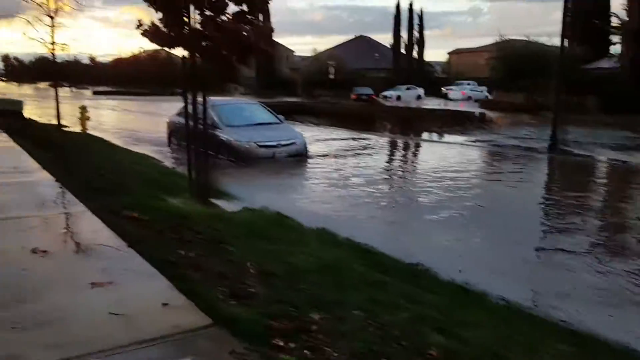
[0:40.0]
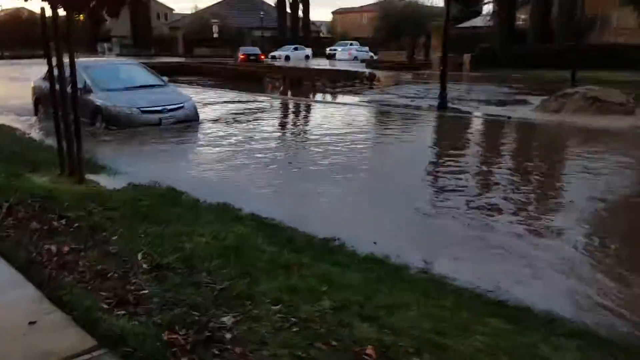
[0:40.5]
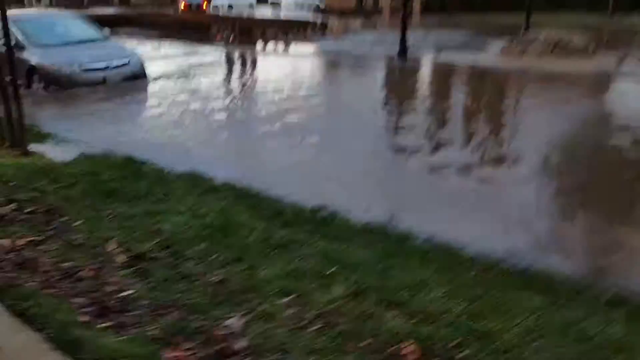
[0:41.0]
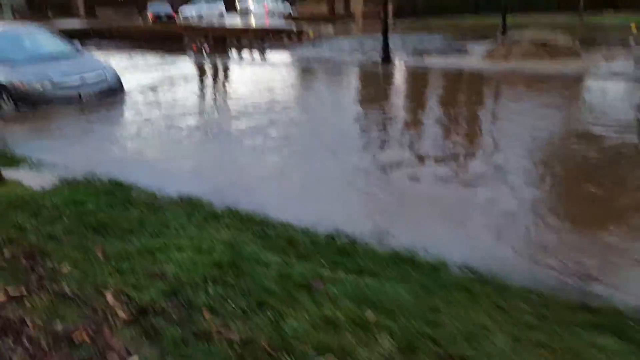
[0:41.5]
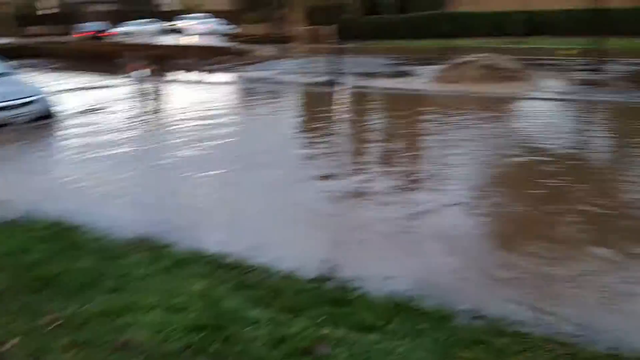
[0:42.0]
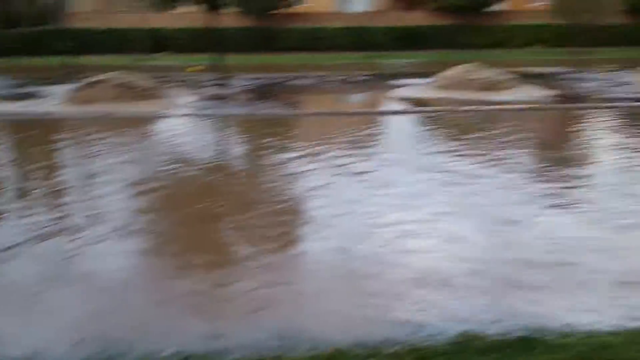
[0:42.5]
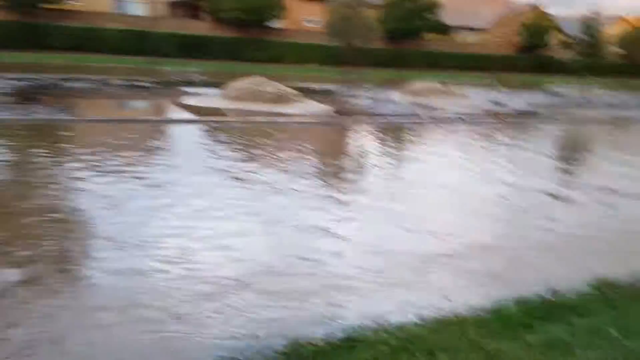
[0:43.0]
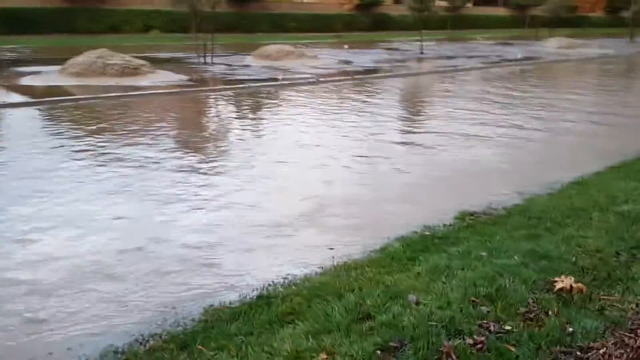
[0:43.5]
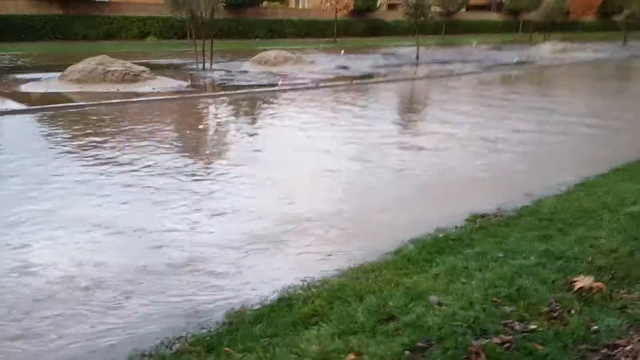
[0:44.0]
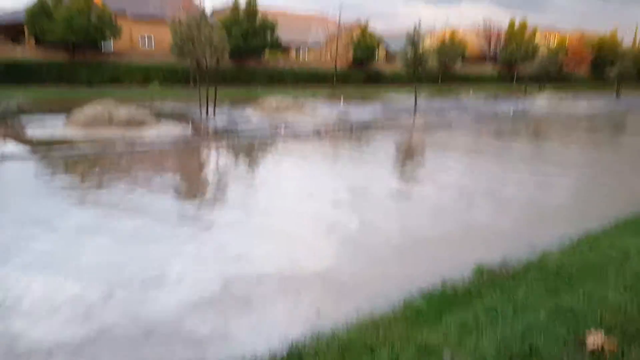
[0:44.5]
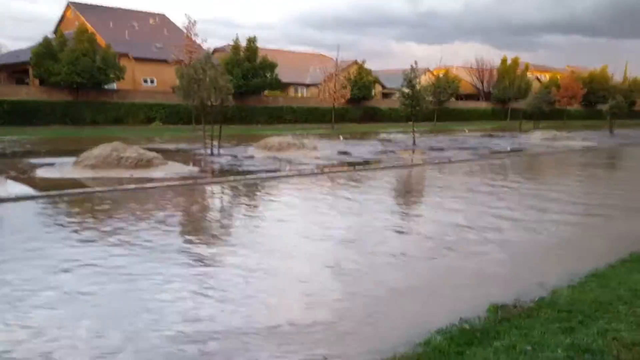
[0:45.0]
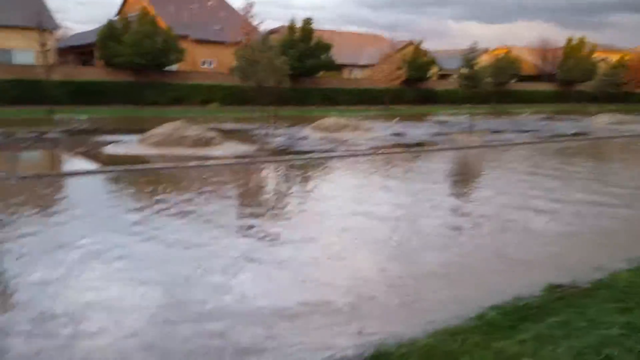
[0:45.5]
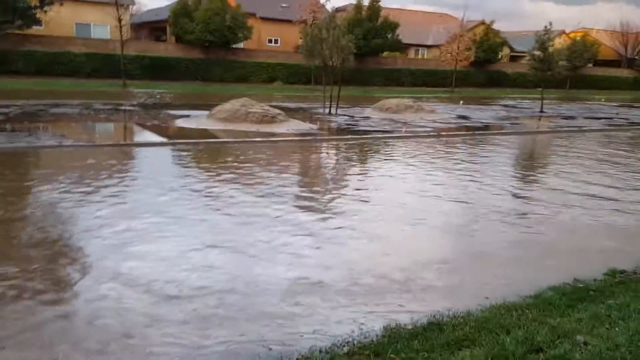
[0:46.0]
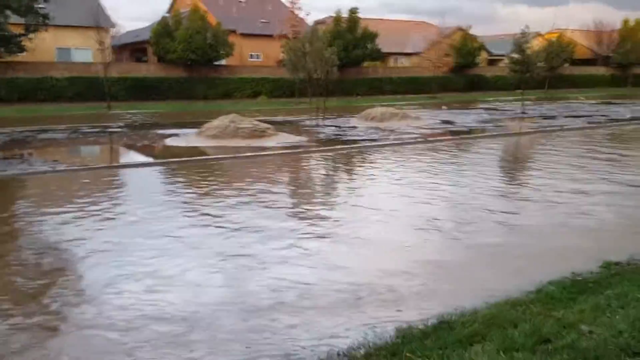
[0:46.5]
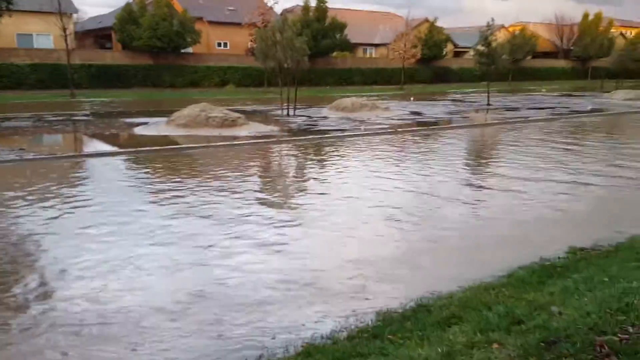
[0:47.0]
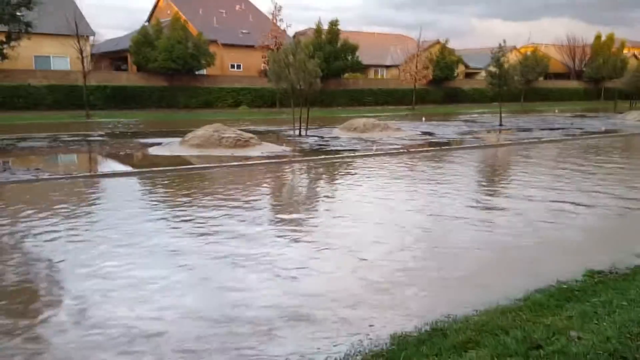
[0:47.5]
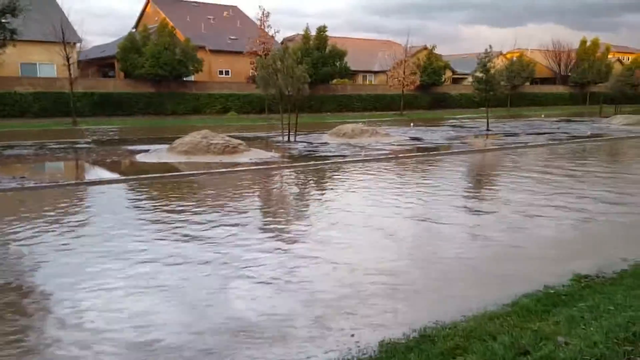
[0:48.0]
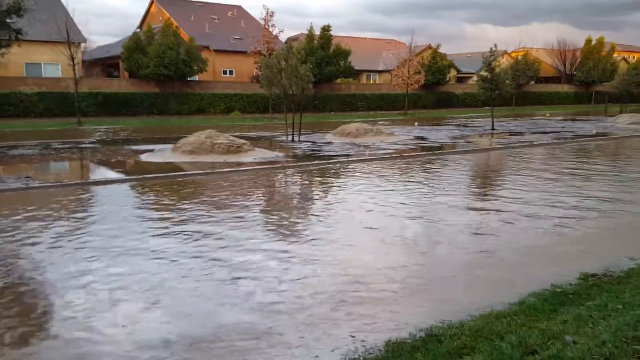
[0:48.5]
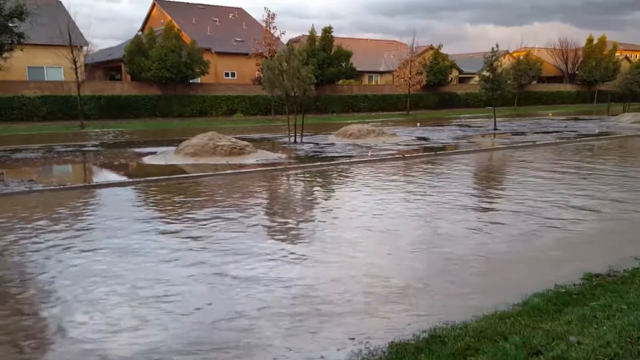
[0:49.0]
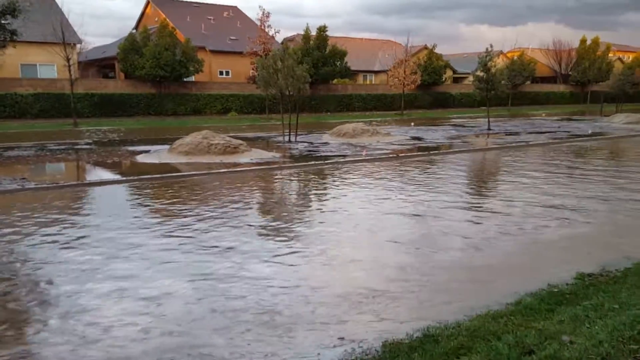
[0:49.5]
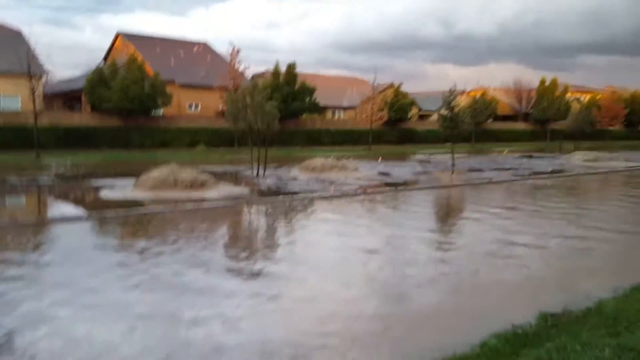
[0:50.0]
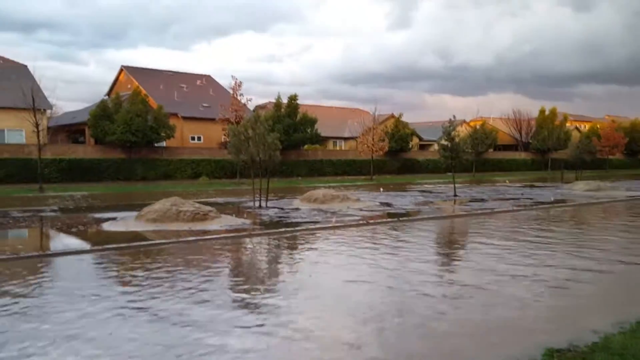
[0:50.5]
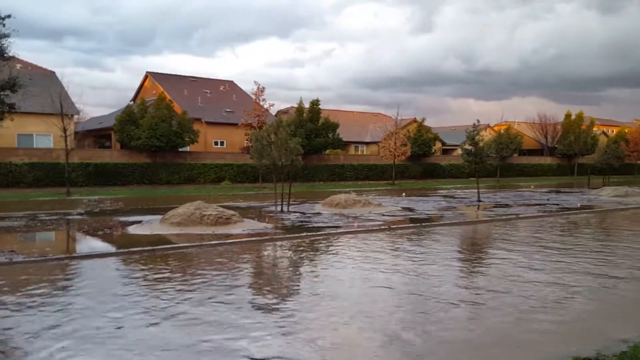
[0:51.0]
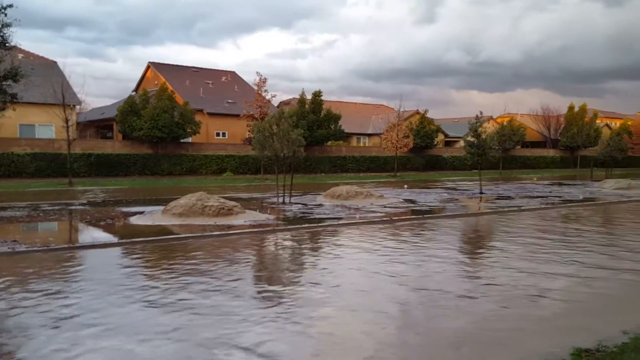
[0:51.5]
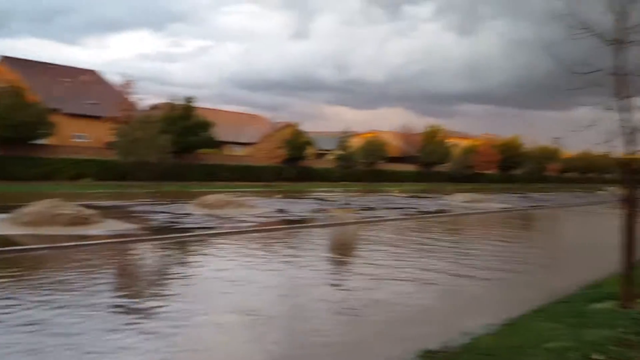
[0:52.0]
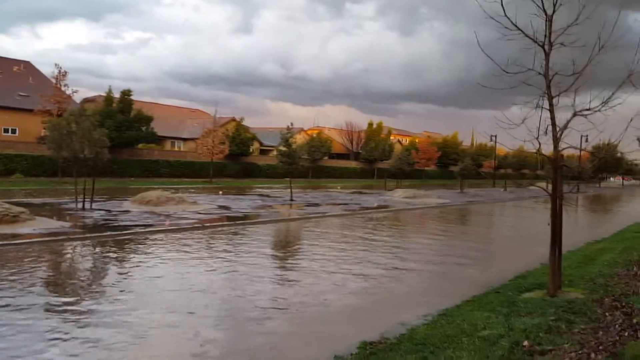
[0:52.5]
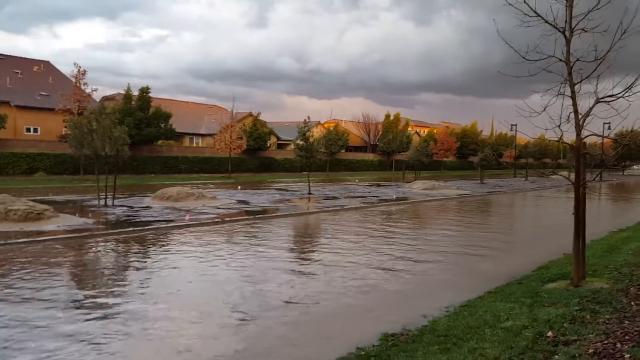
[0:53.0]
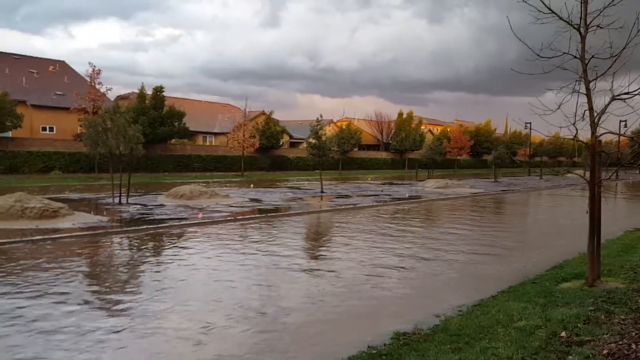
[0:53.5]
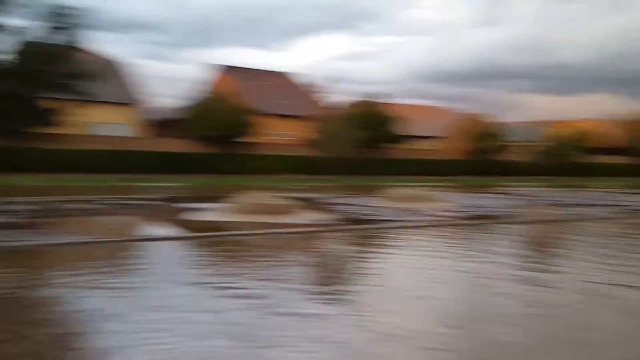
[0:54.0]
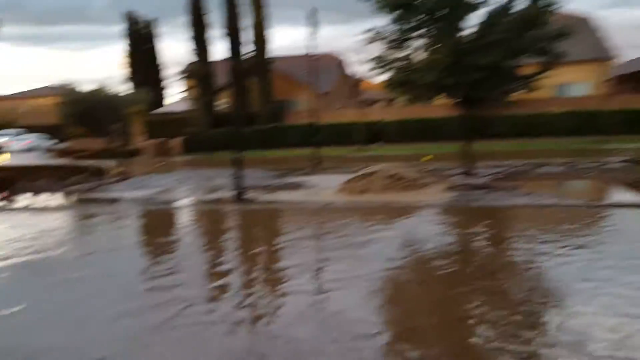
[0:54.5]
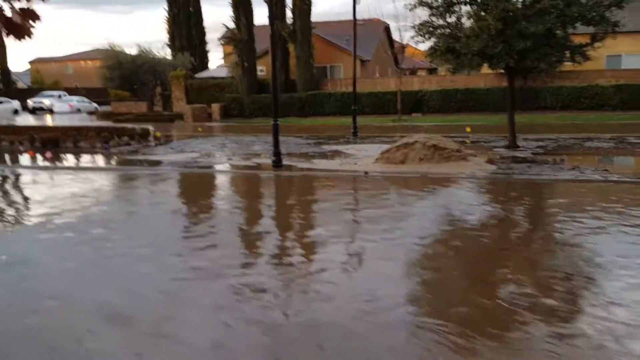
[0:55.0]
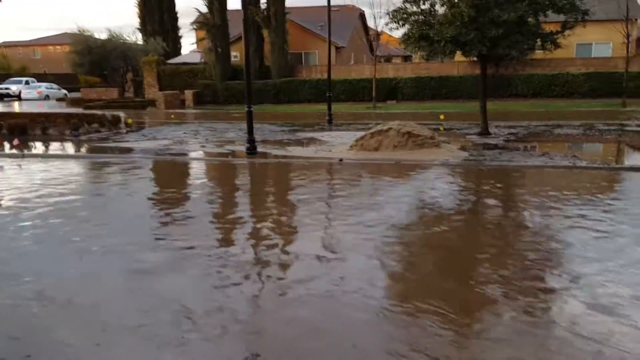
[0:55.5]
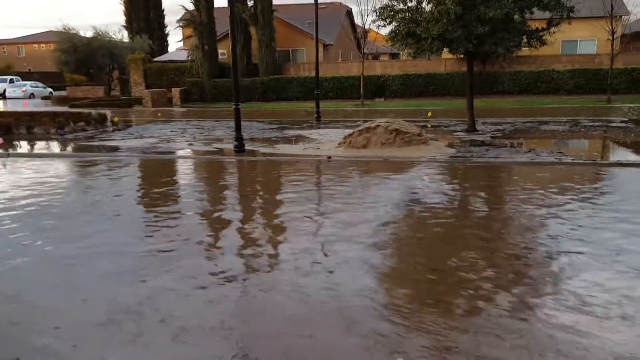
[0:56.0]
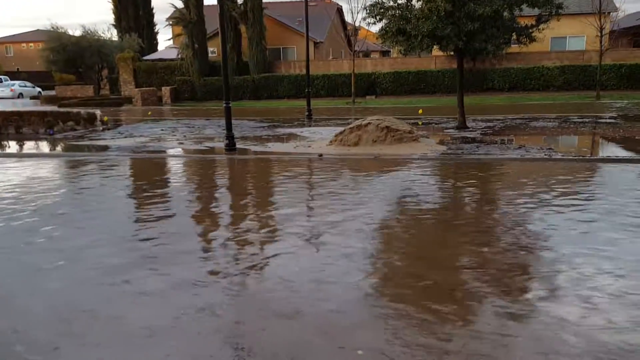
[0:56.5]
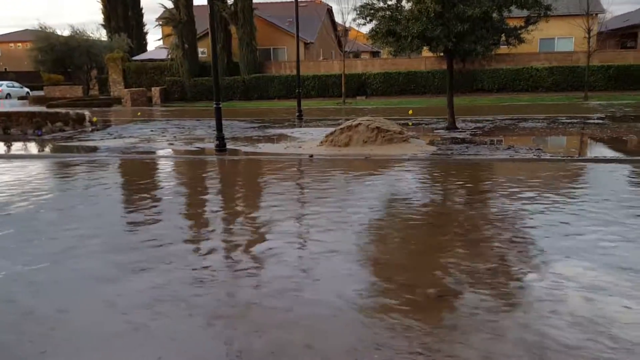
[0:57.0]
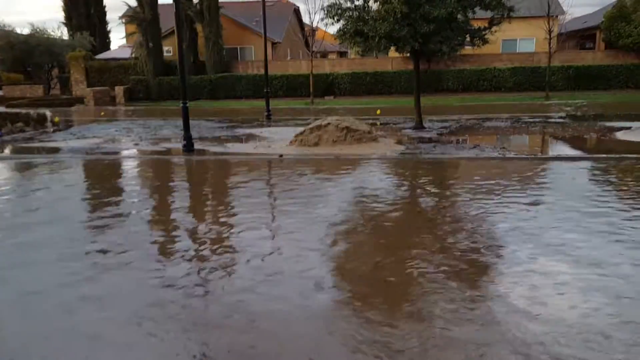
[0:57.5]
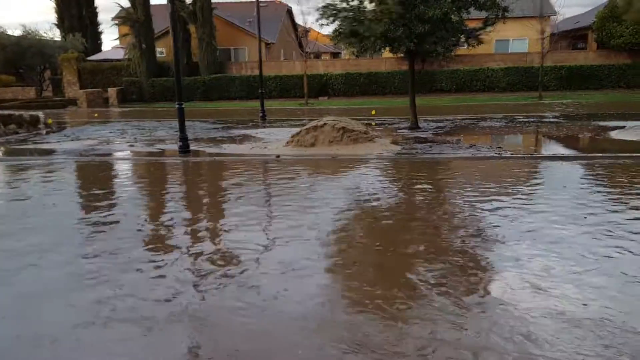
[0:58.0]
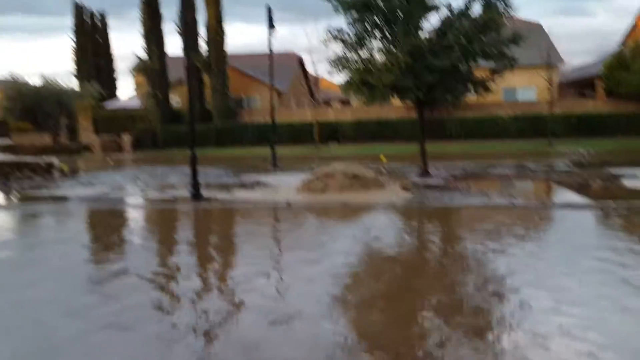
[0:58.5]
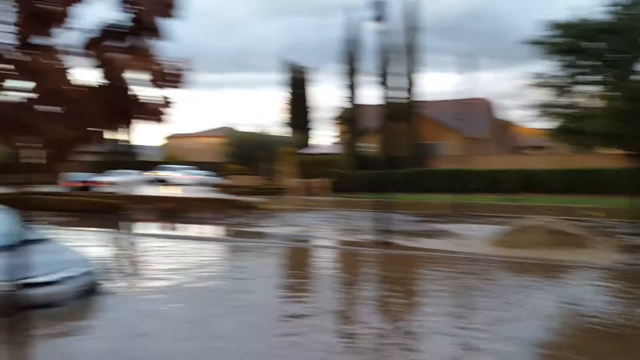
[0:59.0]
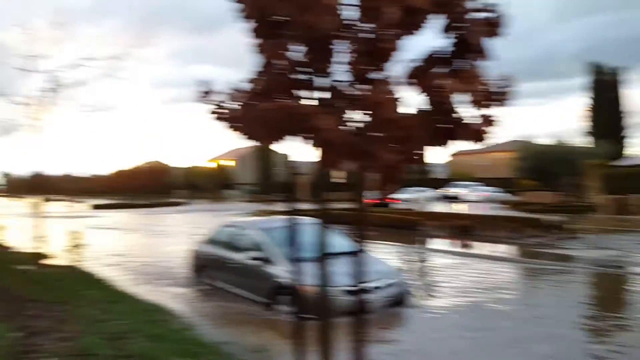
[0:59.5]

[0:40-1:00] The person walking with the camera in hand keeps filming shakily, showing the flooded streets of the neighborhood, where a grey car has almost its entire wheels covered in water. He turns the camera from left to right, away from the car and toward the brown-looking water flowing in the streets; the current runs from the right to the left of the screen. In the background are many trees and houses painted mostly in yellow or light brown. He continues turning the camera to the right, then quickly pans to the left while filming the water. Finally he points the camera almost to the sky, which is quite cloudy, though some sunlight is hitting the water on the street, and two people are in the background.